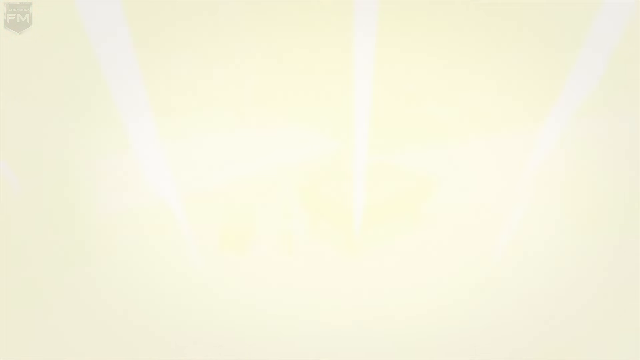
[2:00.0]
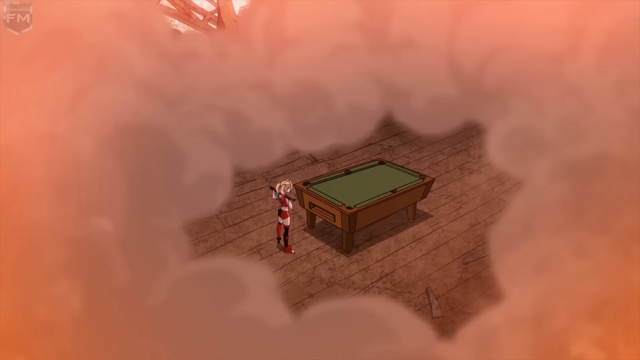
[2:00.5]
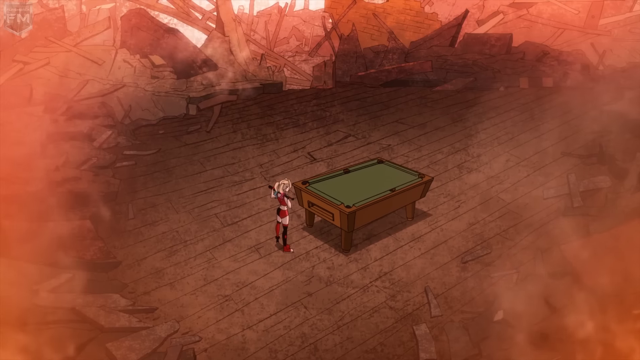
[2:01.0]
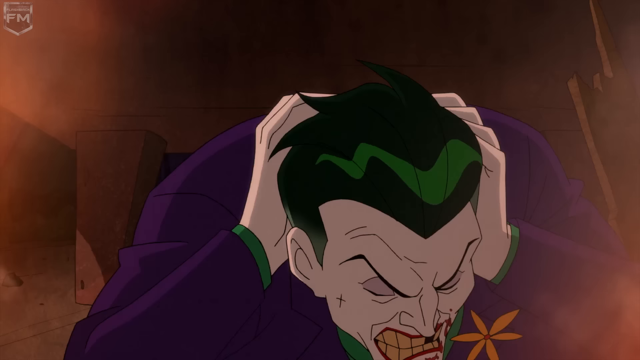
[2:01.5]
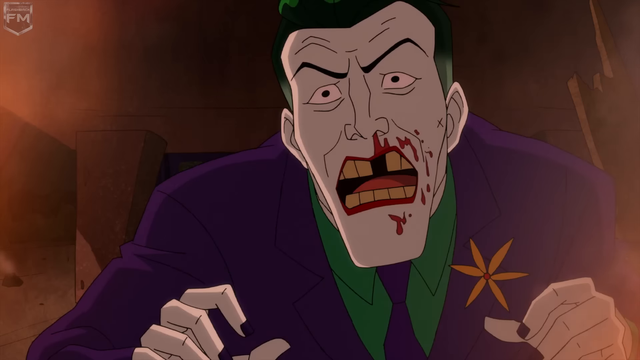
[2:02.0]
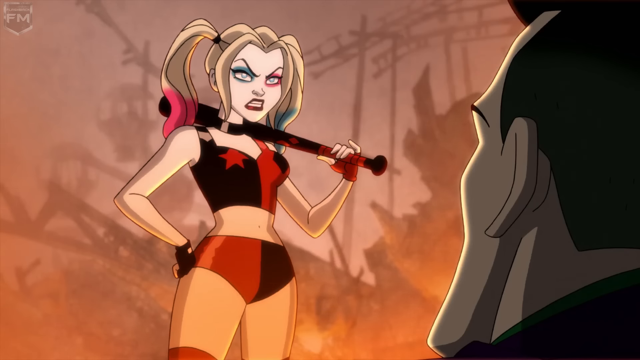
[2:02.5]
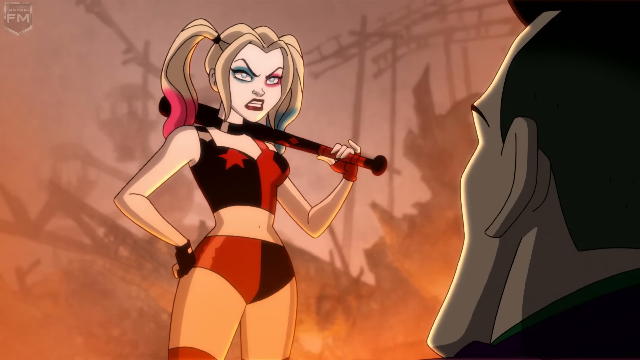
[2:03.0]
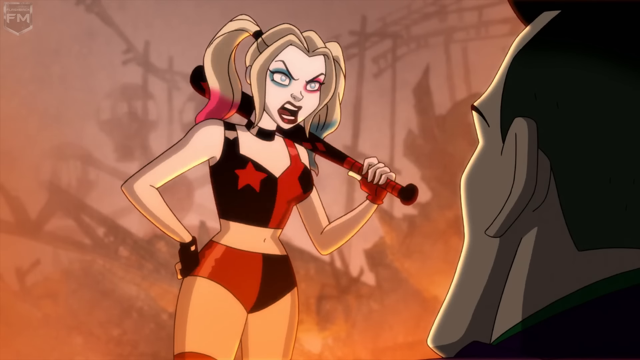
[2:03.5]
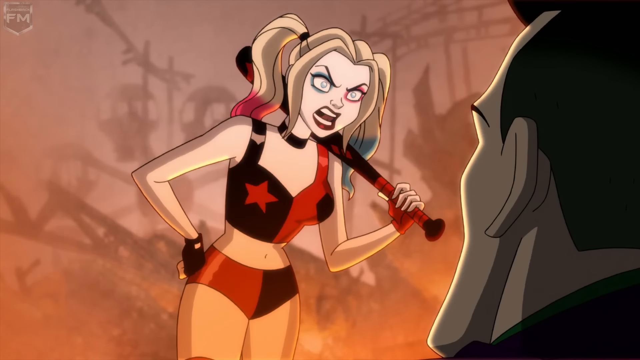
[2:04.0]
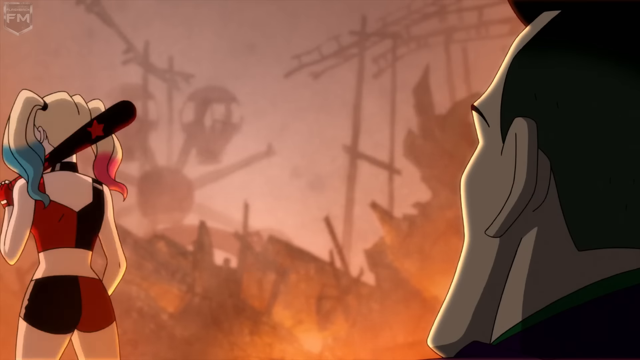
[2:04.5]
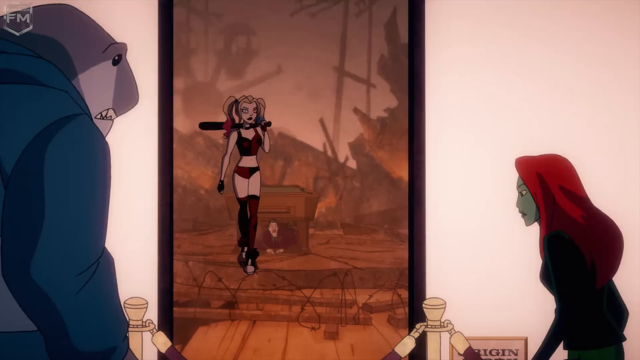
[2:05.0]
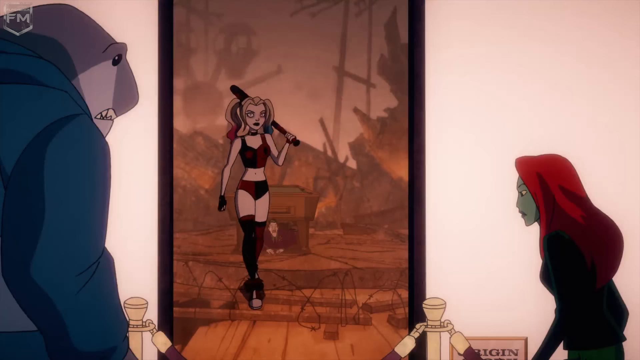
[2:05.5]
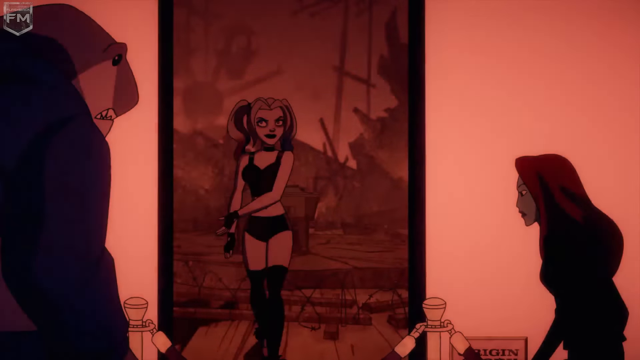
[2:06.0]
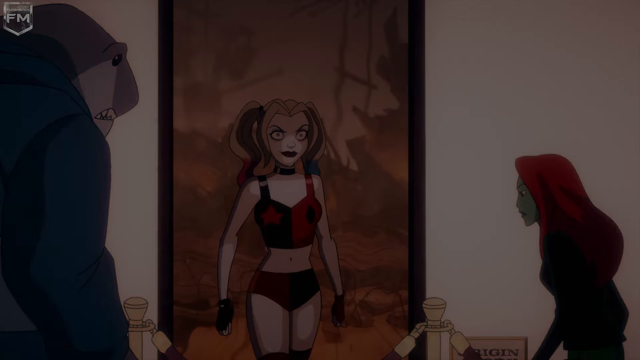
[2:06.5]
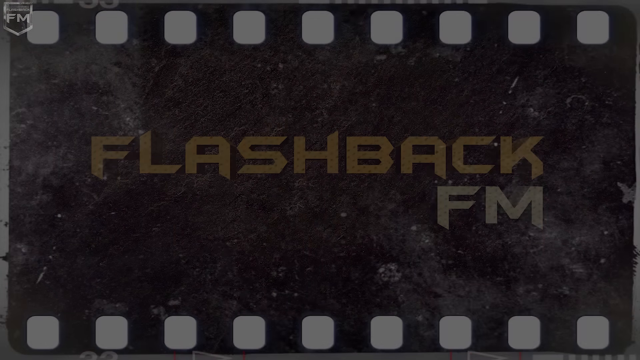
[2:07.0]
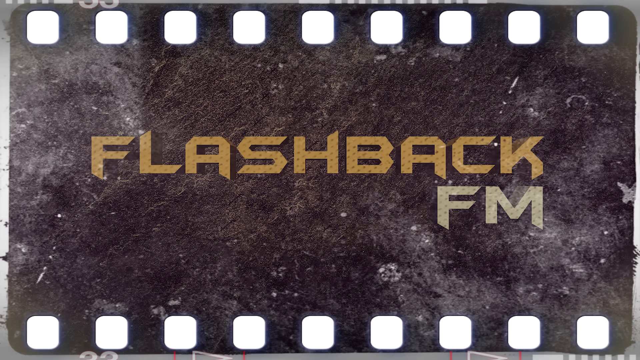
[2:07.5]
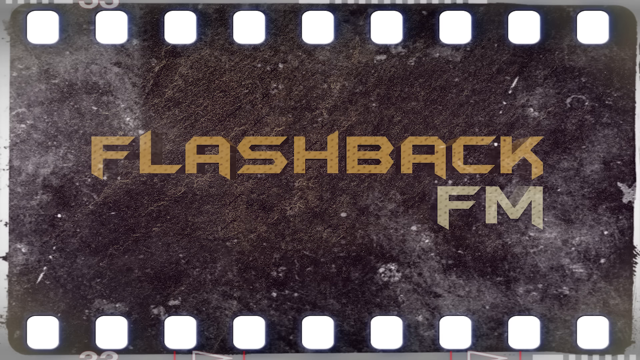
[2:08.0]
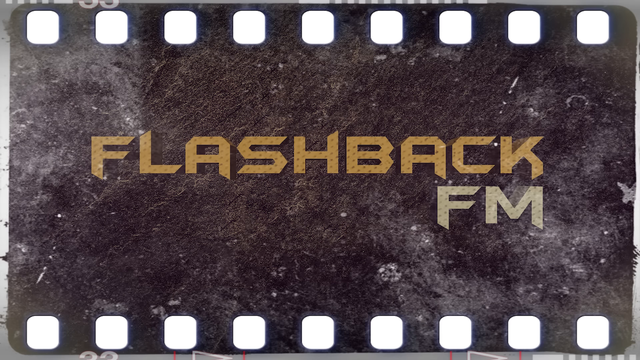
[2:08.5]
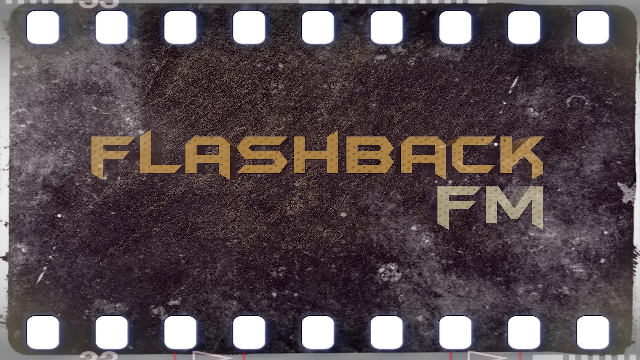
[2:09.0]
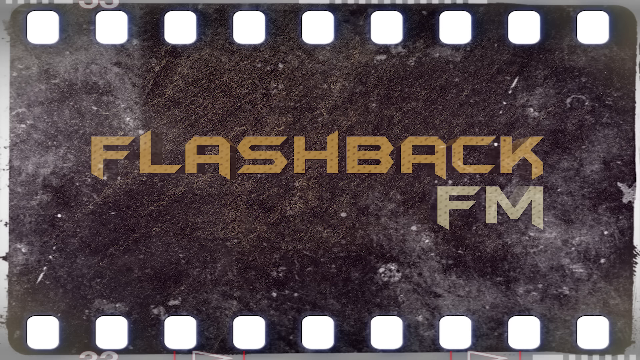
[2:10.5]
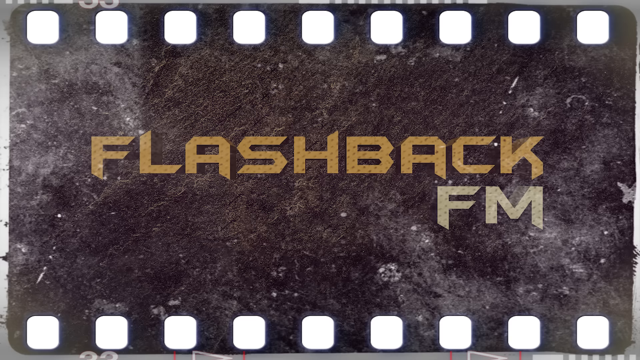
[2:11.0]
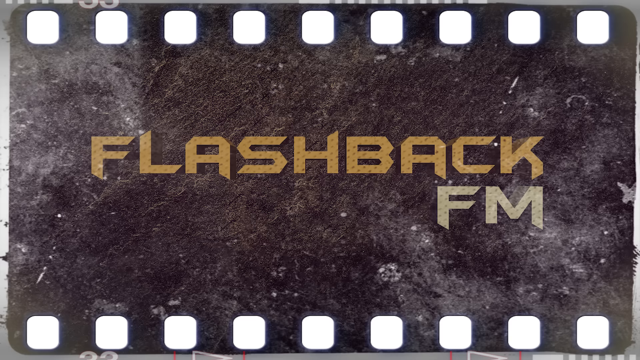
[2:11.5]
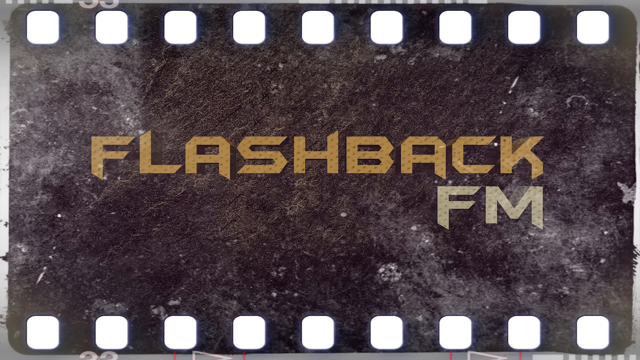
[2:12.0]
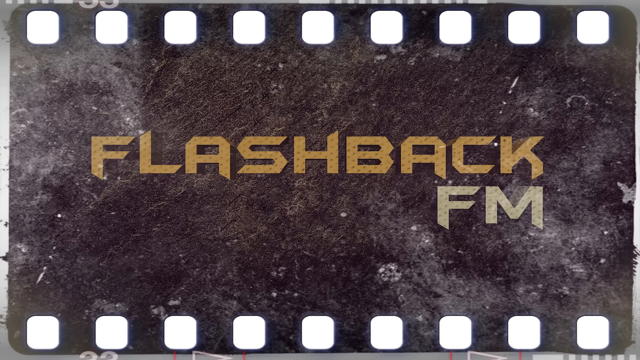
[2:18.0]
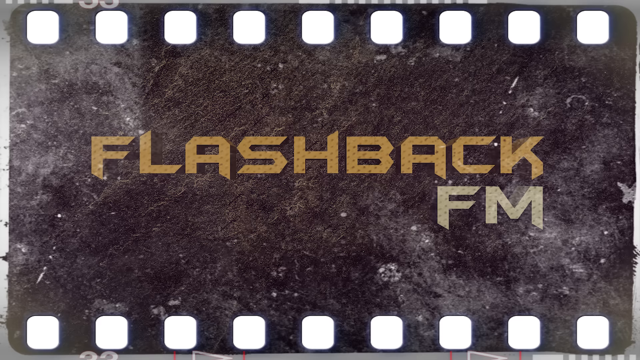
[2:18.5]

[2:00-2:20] In this animated cartoon, the scene begins showing a large warehouse-type area with red smoke around and debris around the edges. A woman with blonde pigtails and a red and black outfit, holding a baseball bat, stands looking at a snooker table. The scene changes to a close-up of a male character with green hair and a purple suit; one of his front teeth is missing and he has blood on his face. Next, the woman with pigtails walks out of an open doorway. Two characters are on the other side of the doorway: a blue shark character and a woman with red hair and green skin. The scene then changes to an image overlay that looks like an old film strip, with the text "Flashback FM" on it.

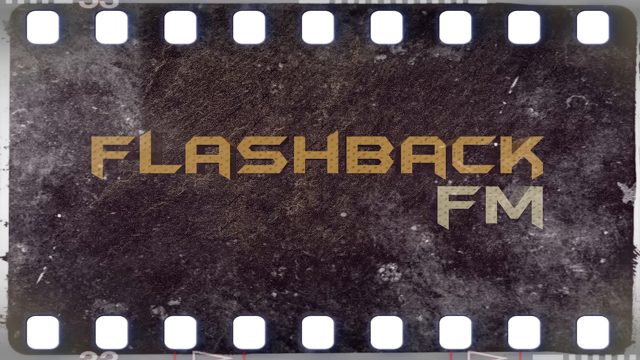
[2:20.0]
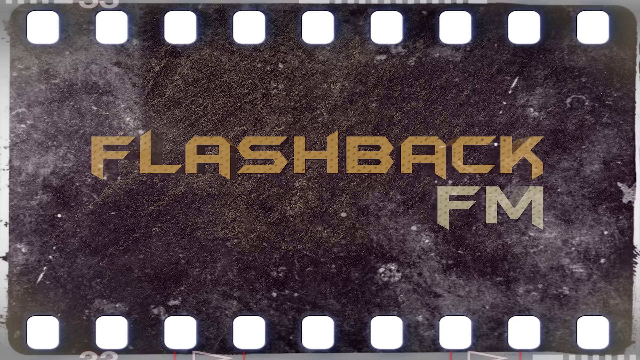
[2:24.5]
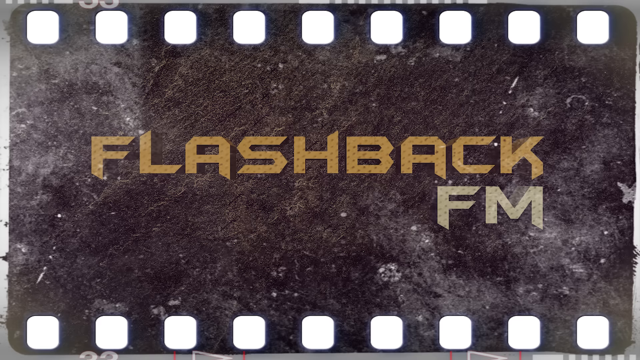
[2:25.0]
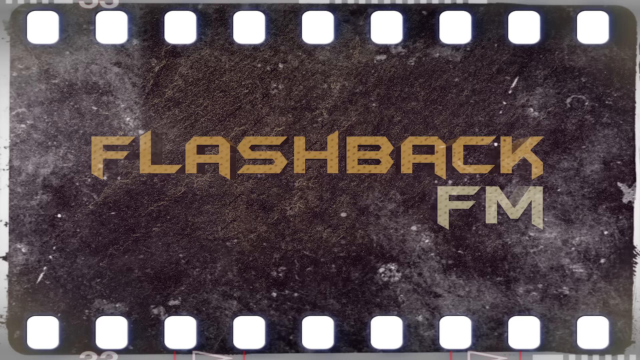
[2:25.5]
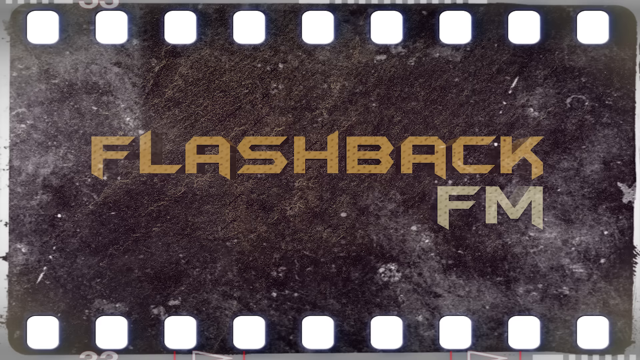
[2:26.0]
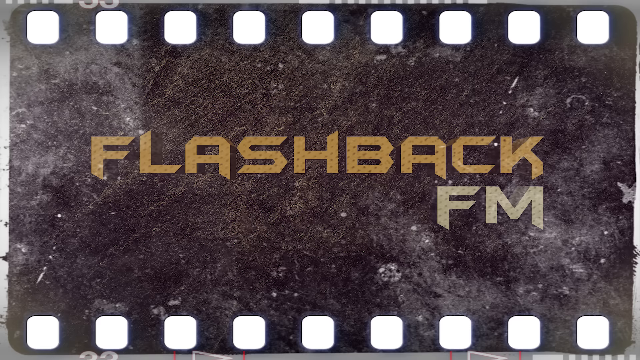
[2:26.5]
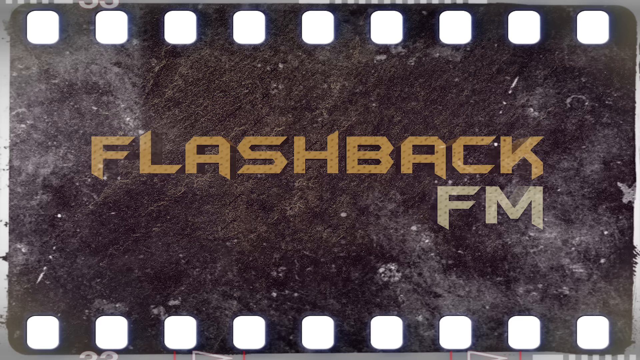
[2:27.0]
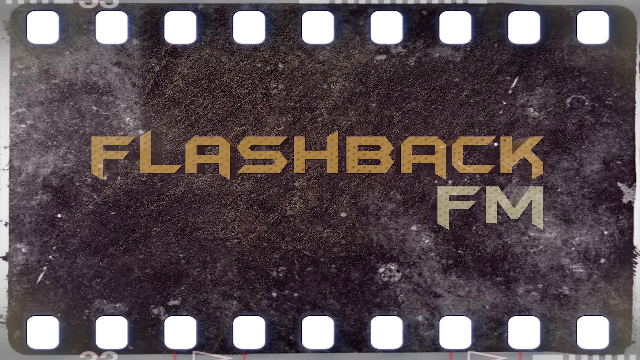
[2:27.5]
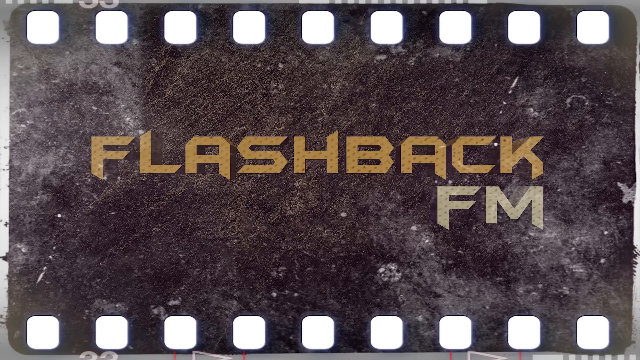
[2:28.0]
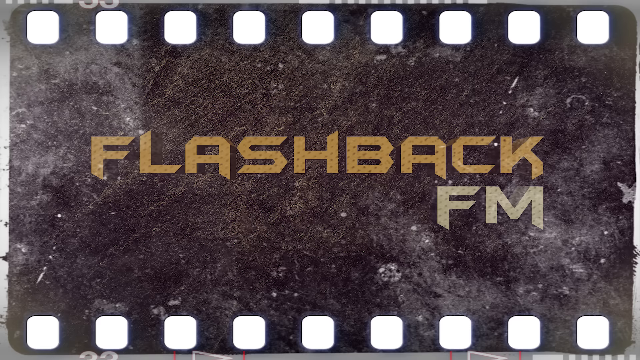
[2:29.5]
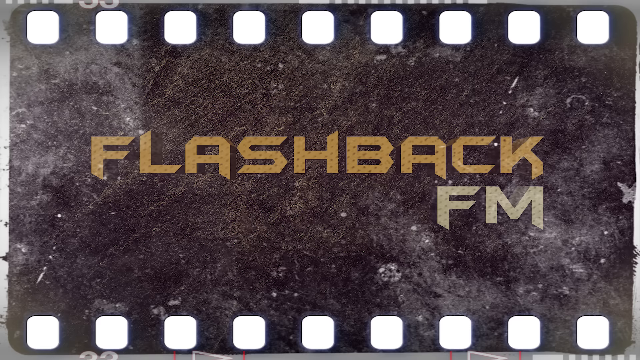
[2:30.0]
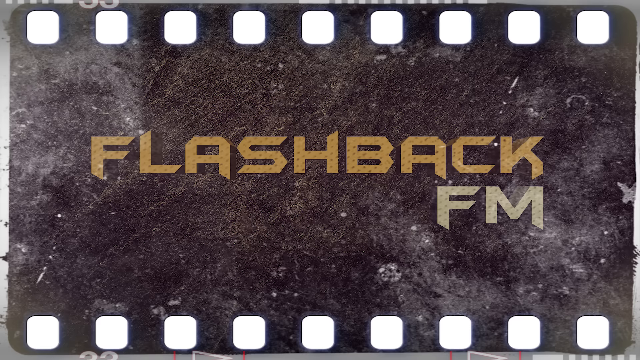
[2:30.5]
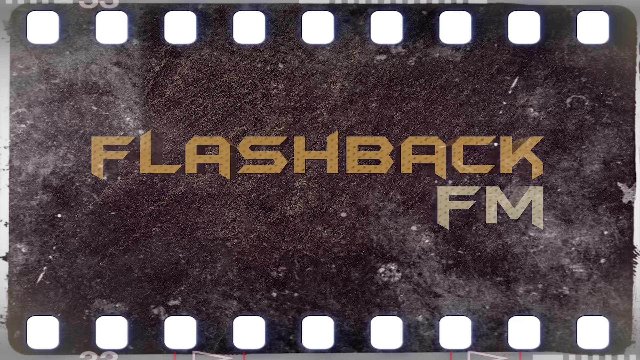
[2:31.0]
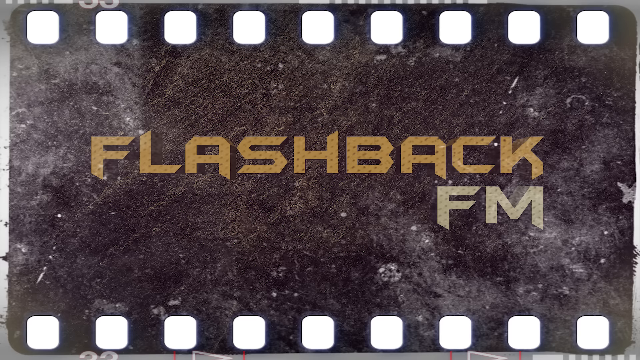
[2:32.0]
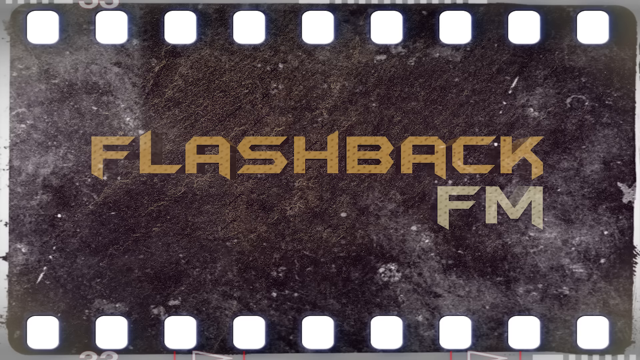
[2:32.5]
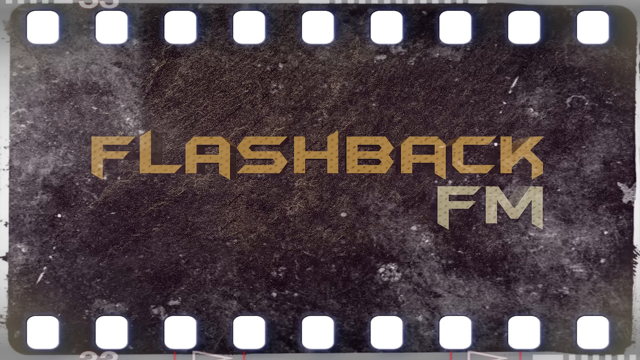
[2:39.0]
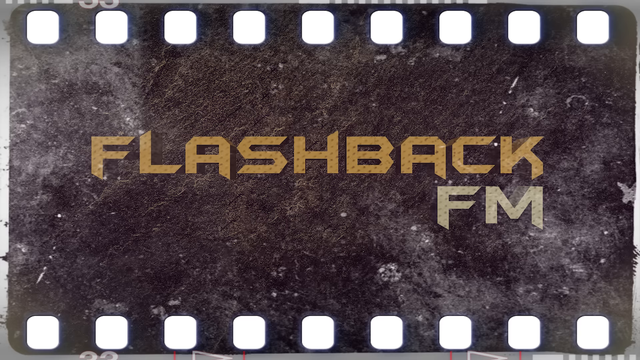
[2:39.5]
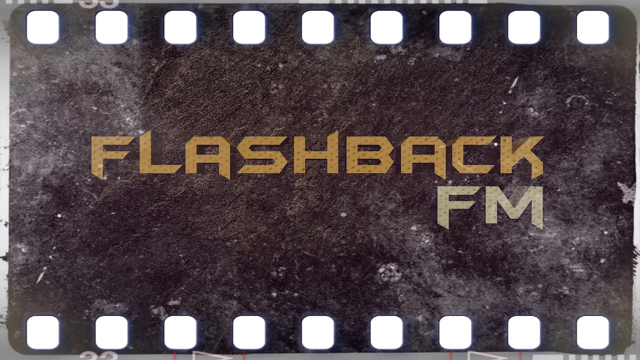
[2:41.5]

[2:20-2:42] A completely still image stays on screen without changing. The background looks like an old film strip: a black background with white square shapes running along the top and the bottom, nine at the top and nine at the bottom. In the center is a bold word in gold text that says "flashback", and below it a word in off-white text that says "FM". The image has a lot of texture, giving it an antique, old-style feel.